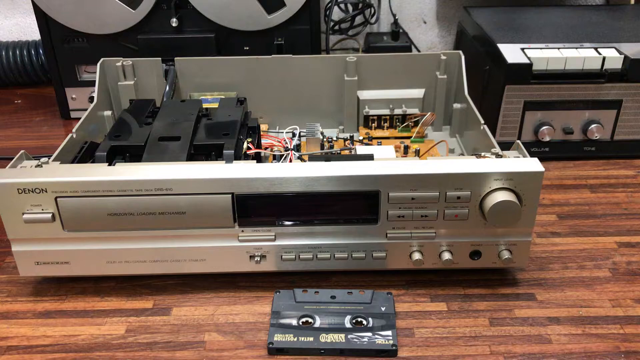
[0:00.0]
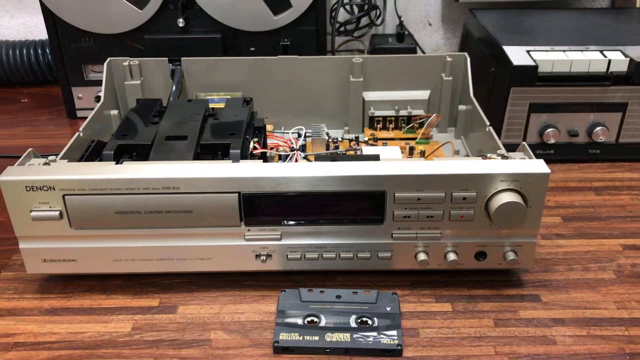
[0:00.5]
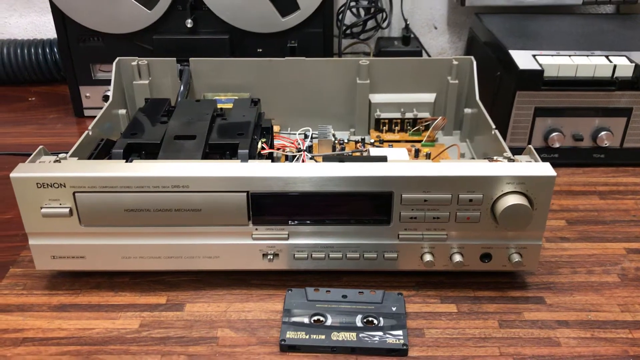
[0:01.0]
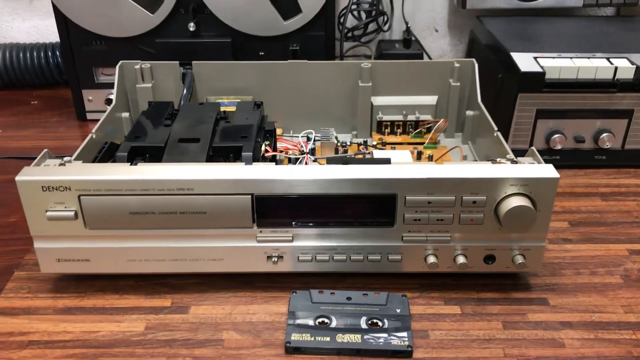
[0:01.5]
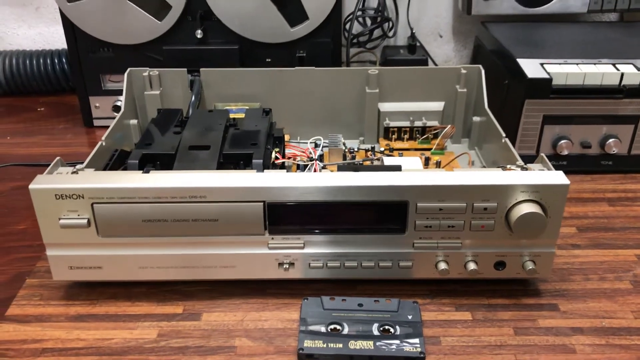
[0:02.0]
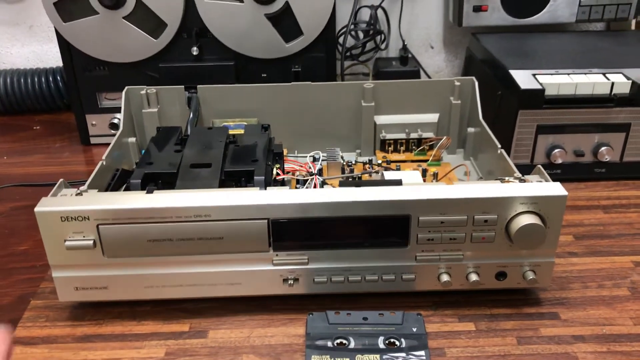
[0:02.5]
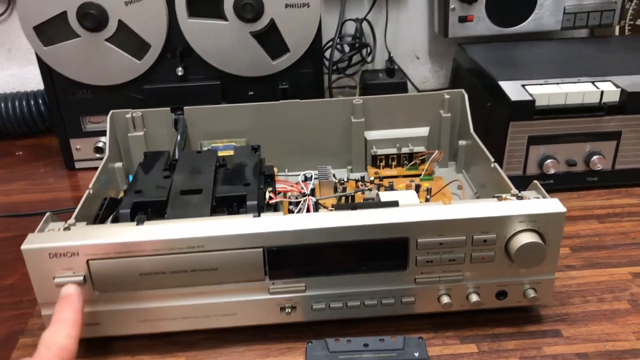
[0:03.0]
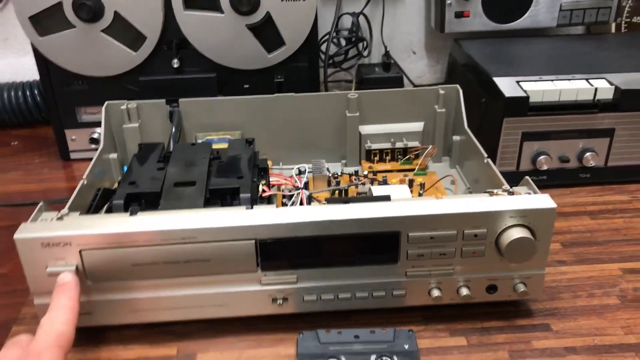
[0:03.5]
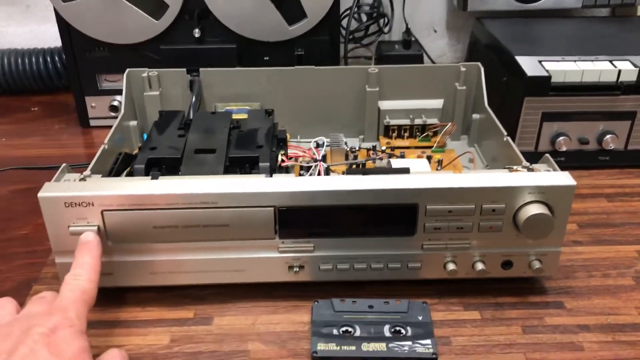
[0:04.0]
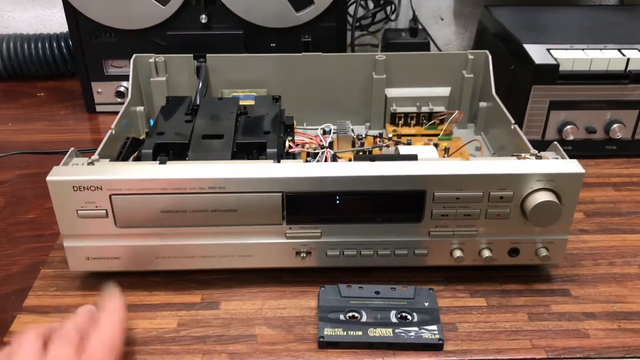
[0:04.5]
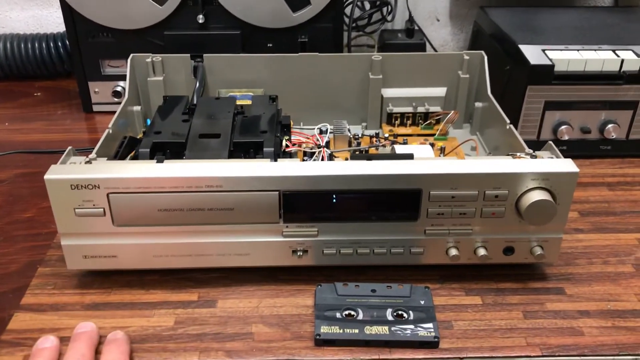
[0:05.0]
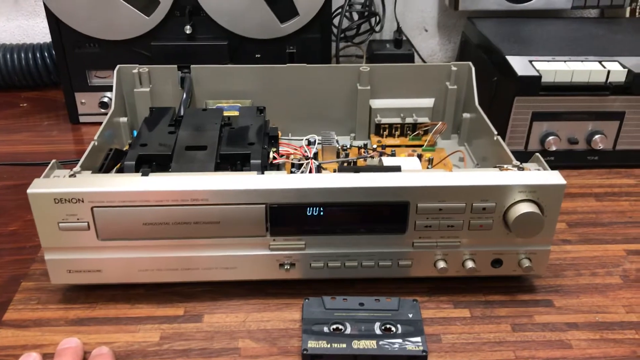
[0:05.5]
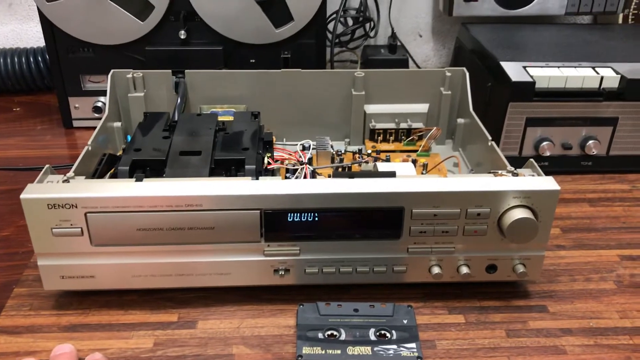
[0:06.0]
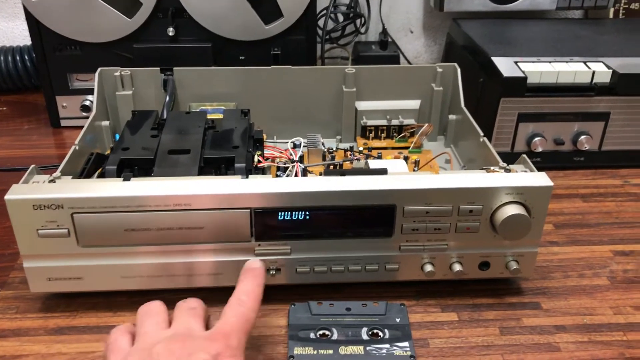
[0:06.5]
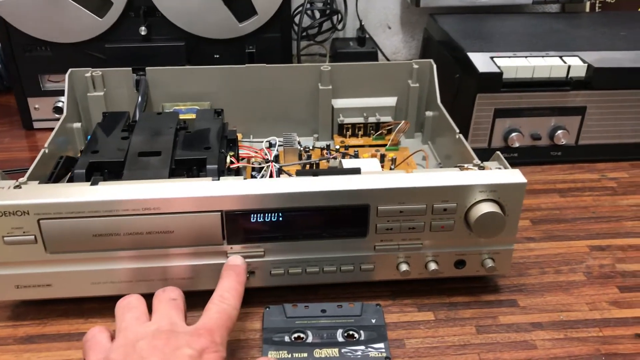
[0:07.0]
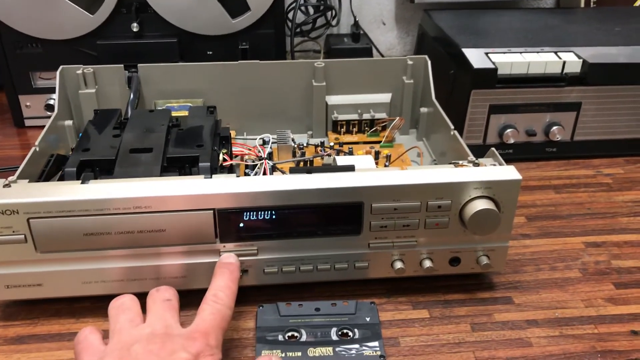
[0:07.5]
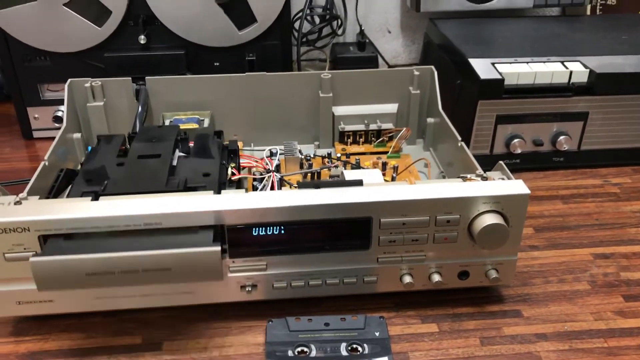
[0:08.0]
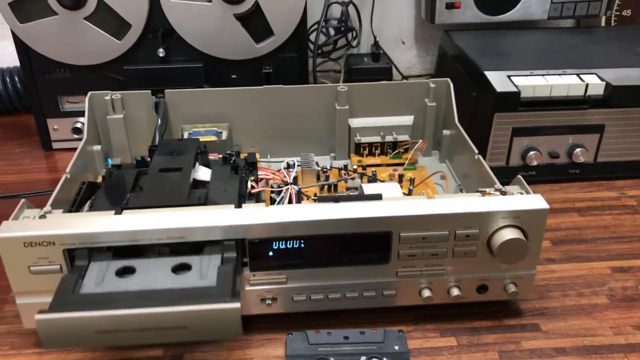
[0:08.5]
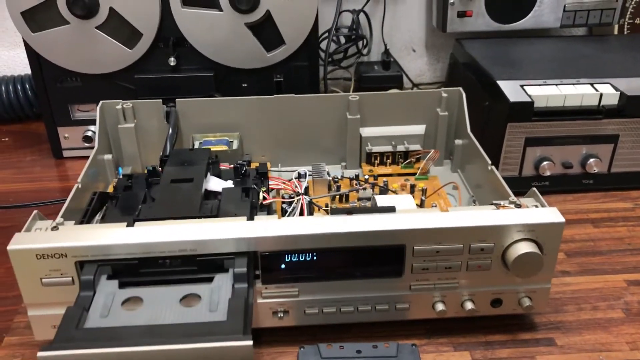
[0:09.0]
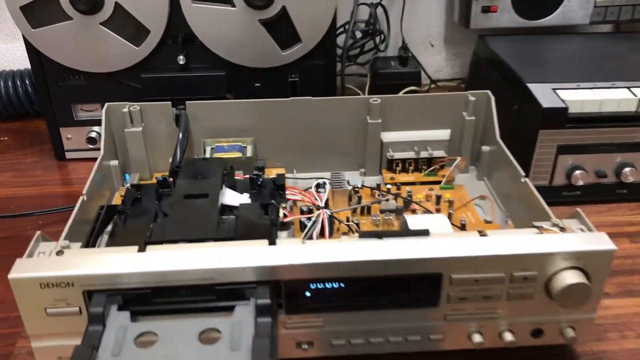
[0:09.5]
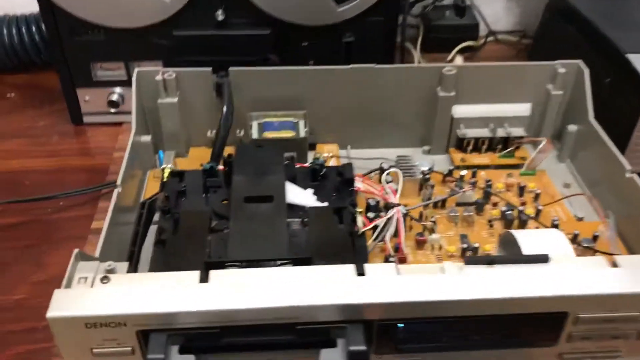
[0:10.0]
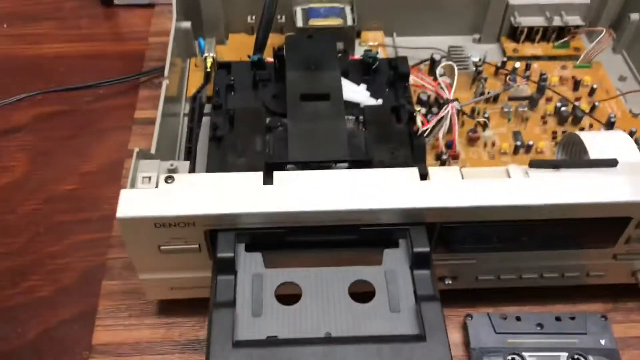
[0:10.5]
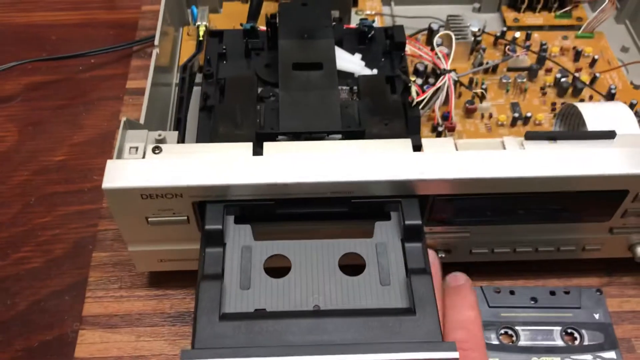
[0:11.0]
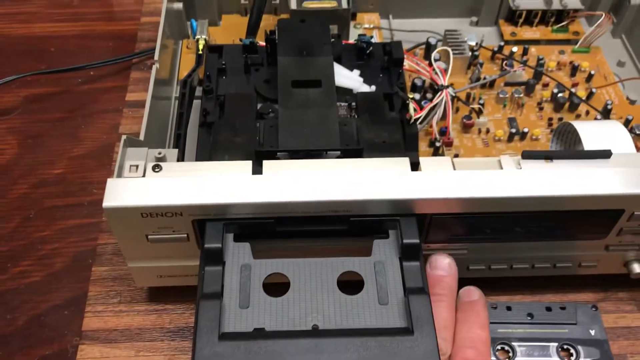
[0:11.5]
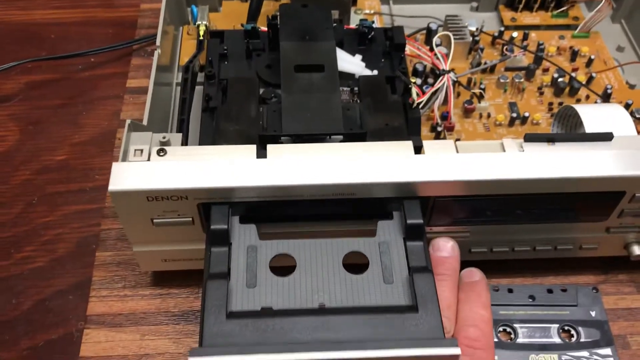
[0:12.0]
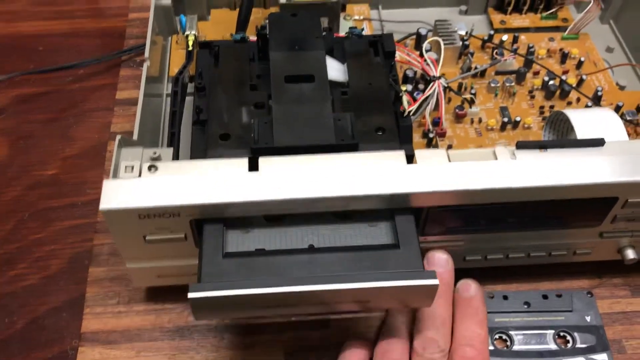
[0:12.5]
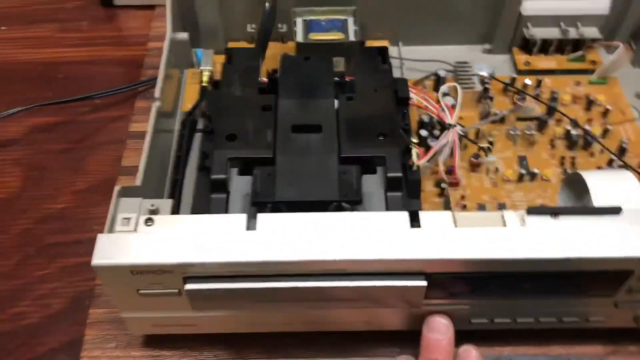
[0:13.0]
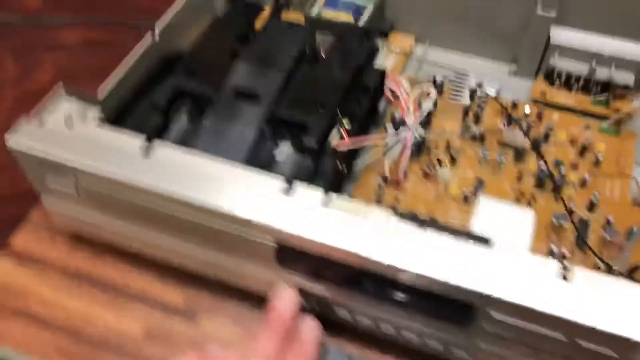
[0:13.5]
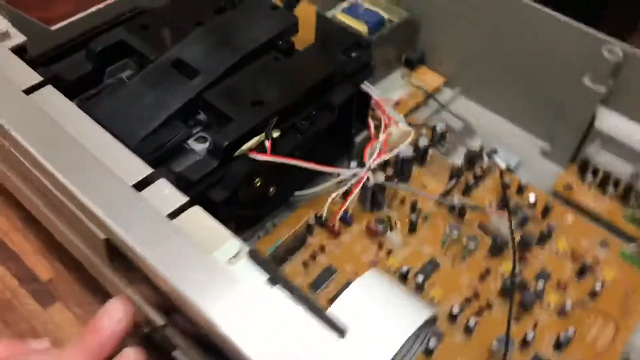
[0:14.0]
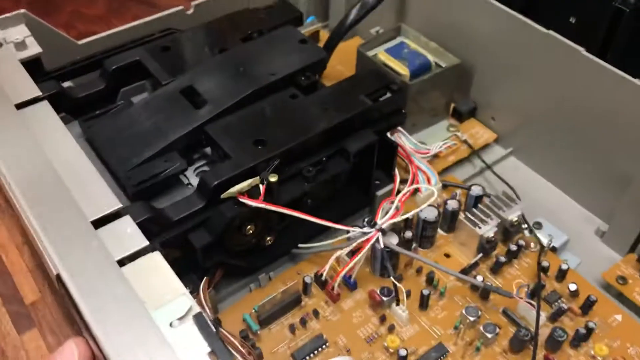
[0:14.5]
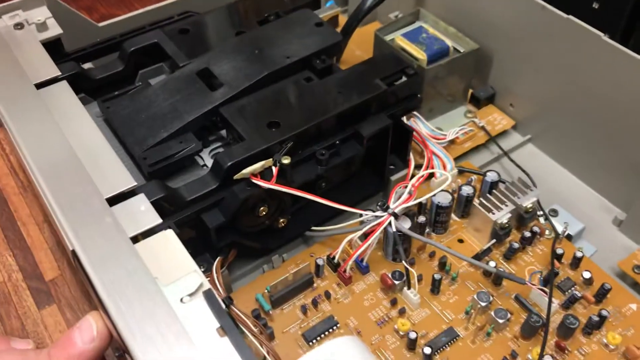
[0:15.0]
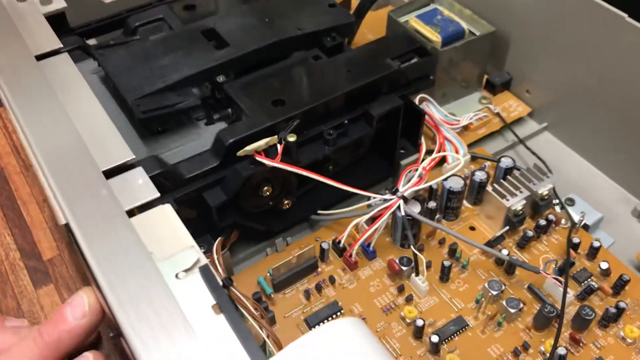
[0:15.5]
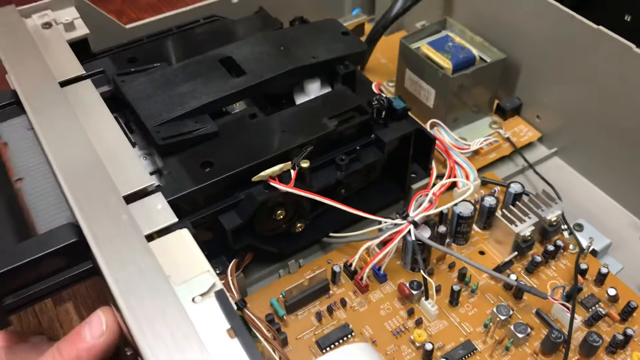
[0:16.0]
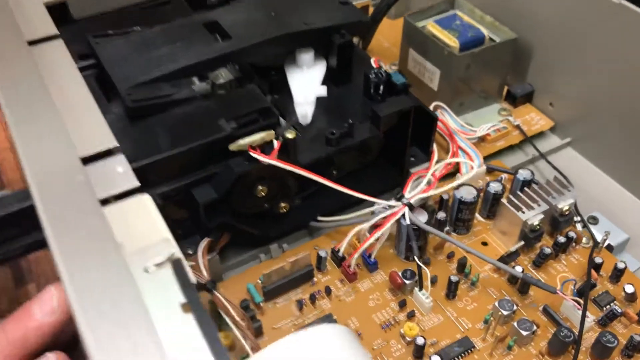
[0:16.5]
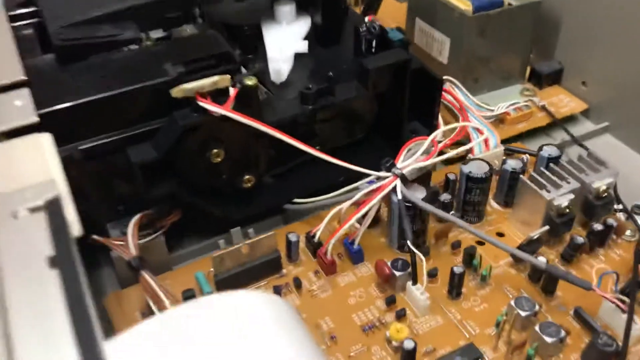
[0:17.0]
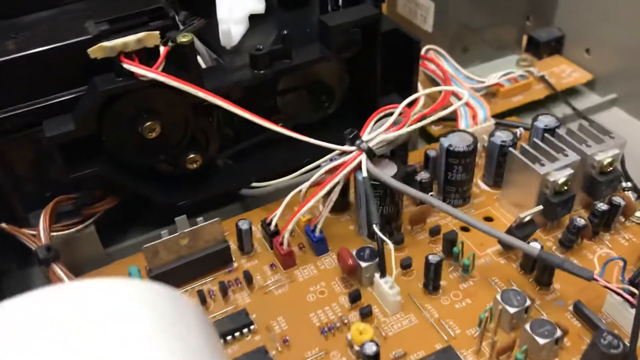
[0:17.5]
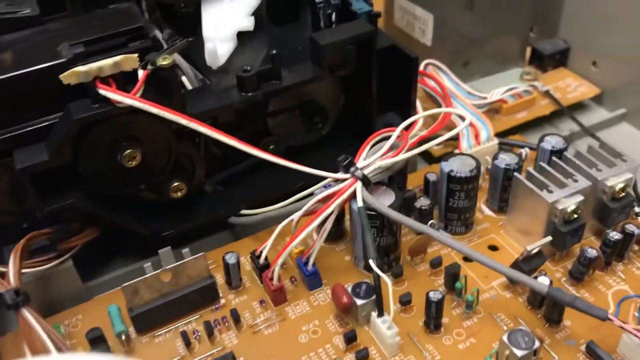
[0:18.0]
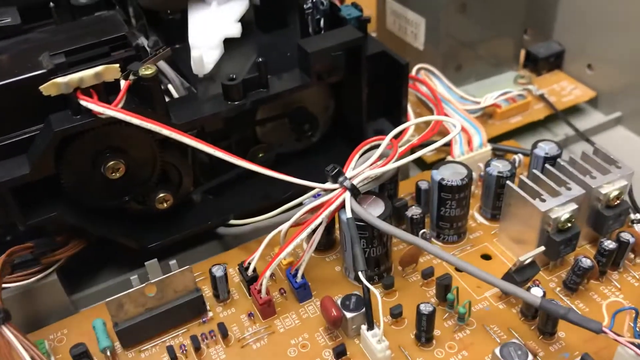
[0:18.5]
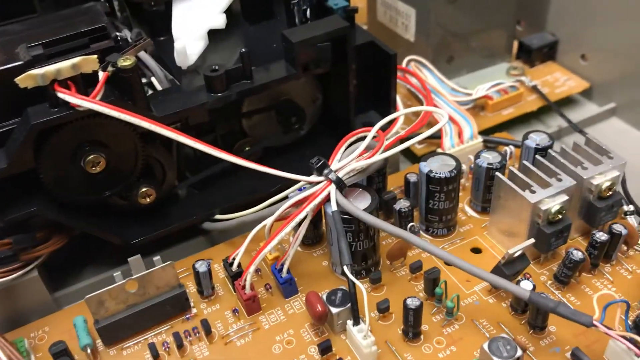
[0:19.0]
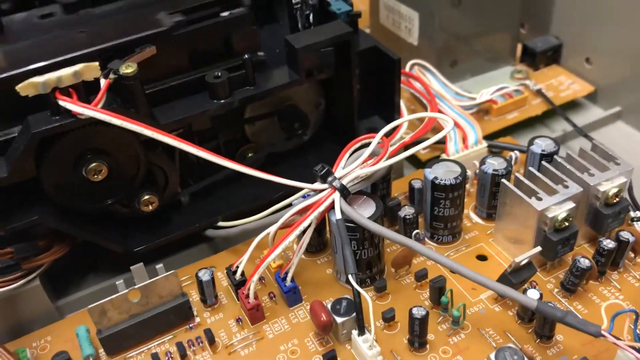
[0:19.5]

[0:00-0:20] The footage appears to show video recording equipment being operated. Something is brought in and connected, and then the camera looks at different parts of the machines.